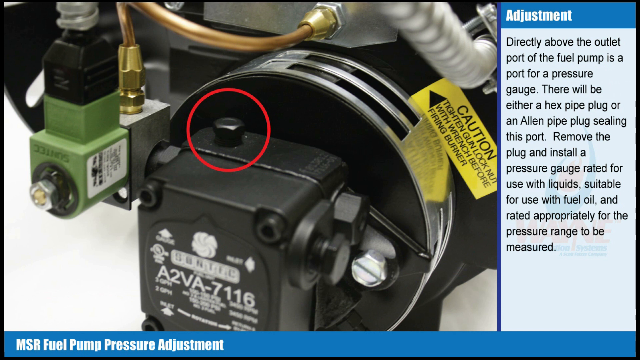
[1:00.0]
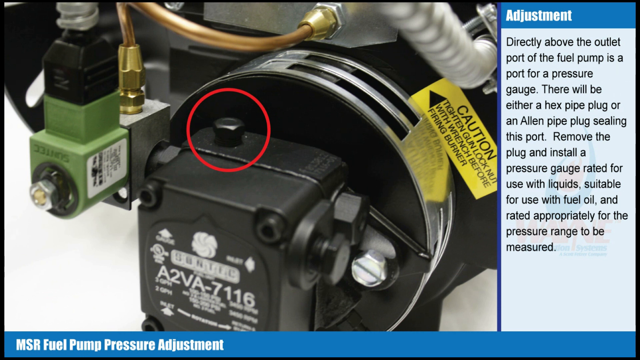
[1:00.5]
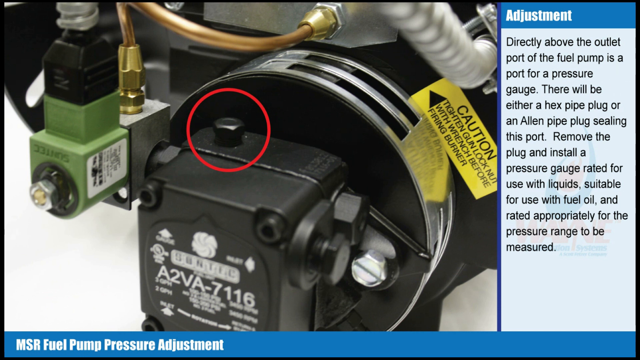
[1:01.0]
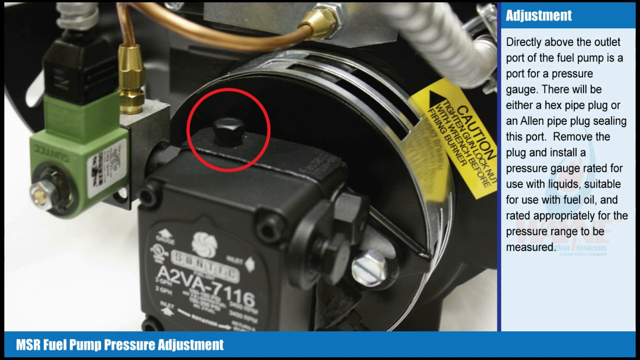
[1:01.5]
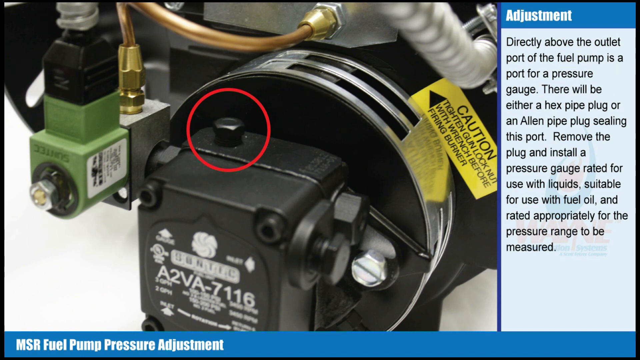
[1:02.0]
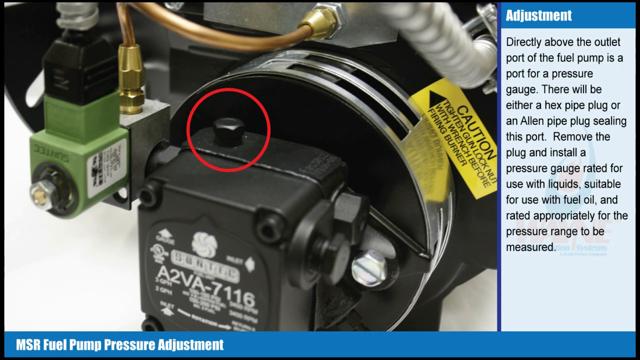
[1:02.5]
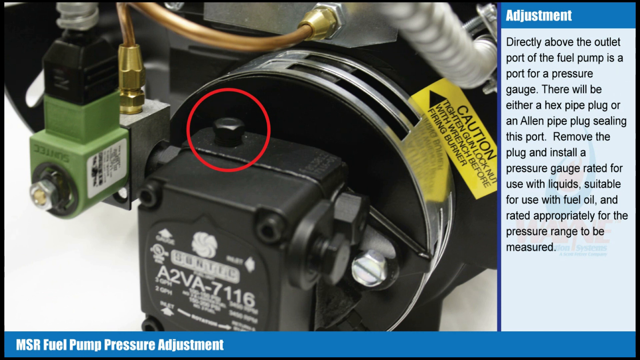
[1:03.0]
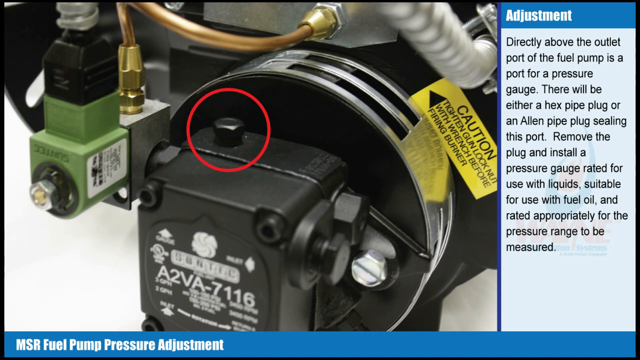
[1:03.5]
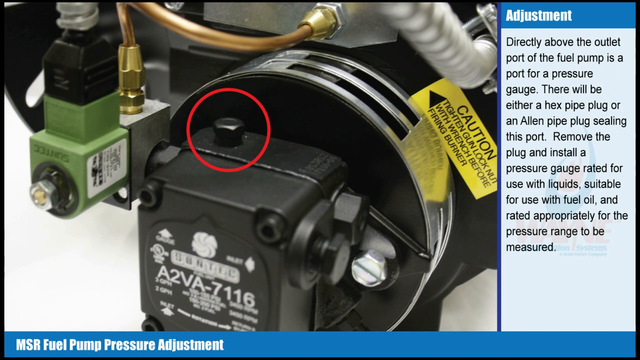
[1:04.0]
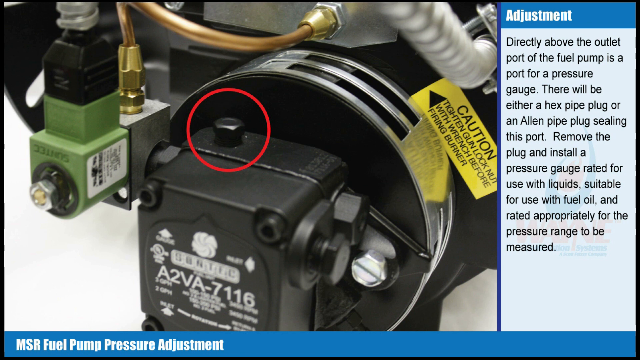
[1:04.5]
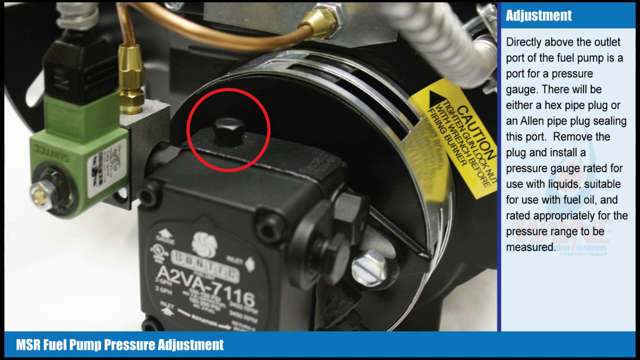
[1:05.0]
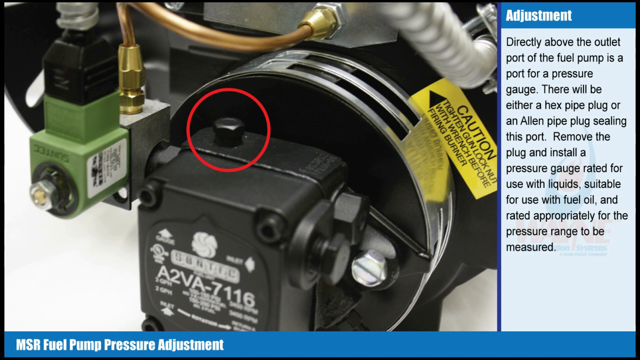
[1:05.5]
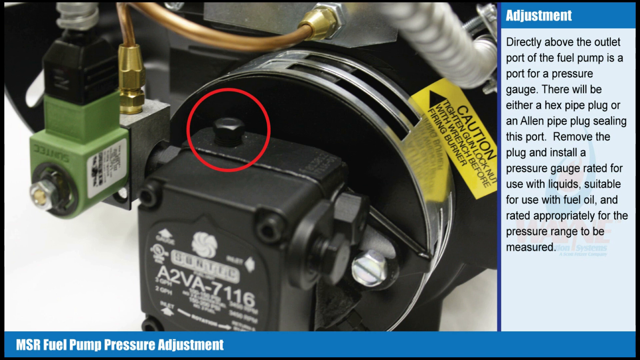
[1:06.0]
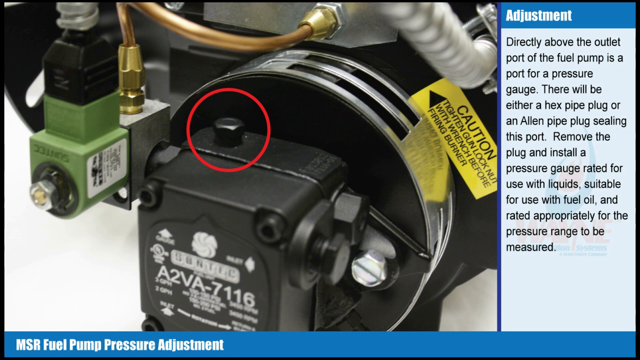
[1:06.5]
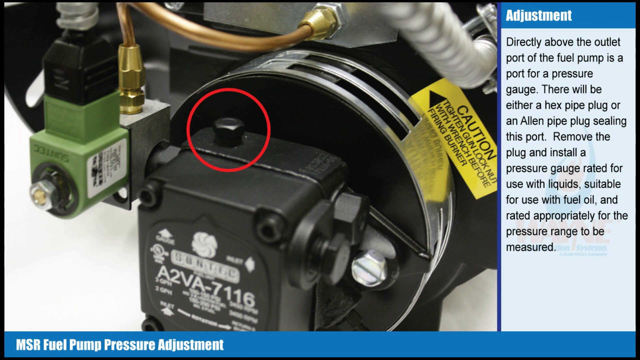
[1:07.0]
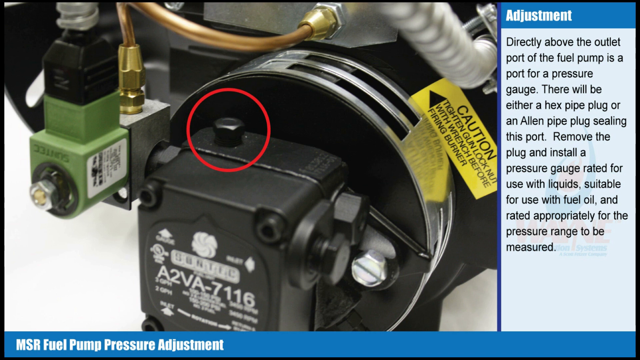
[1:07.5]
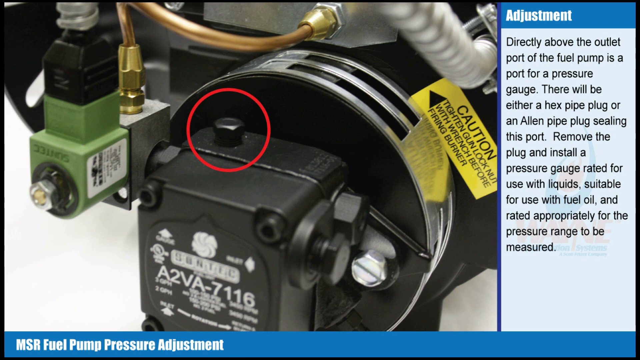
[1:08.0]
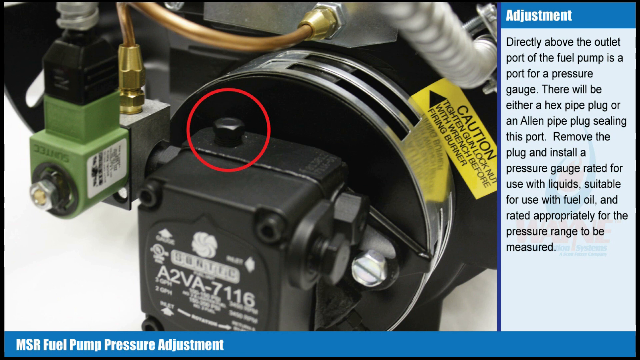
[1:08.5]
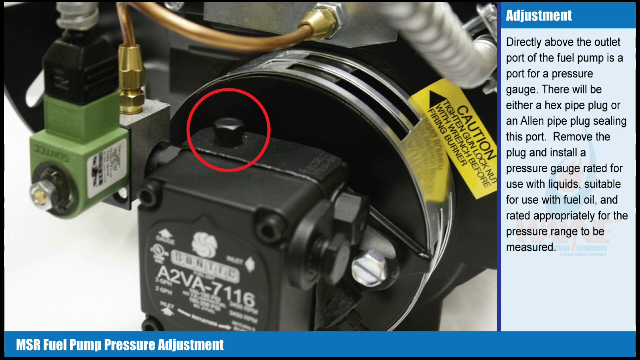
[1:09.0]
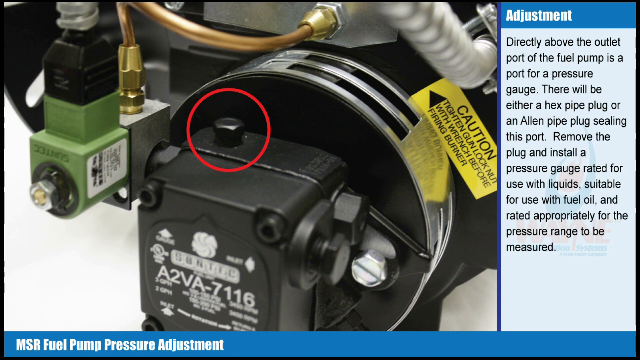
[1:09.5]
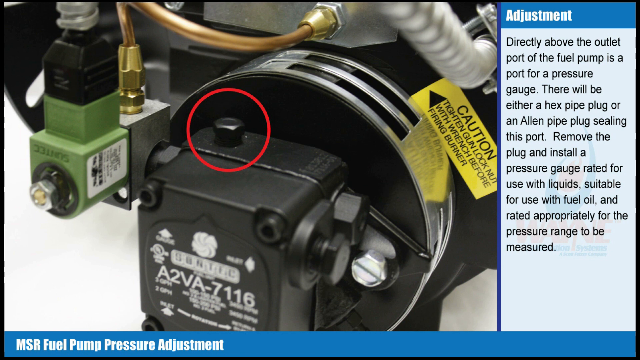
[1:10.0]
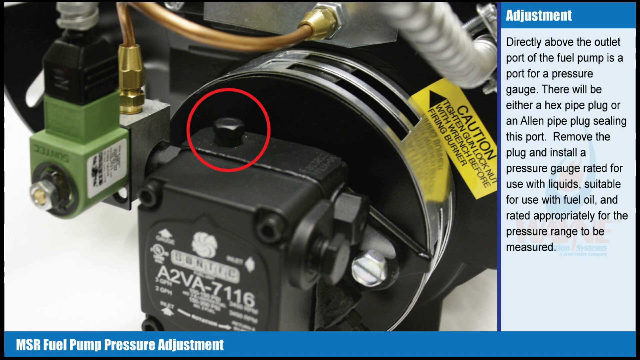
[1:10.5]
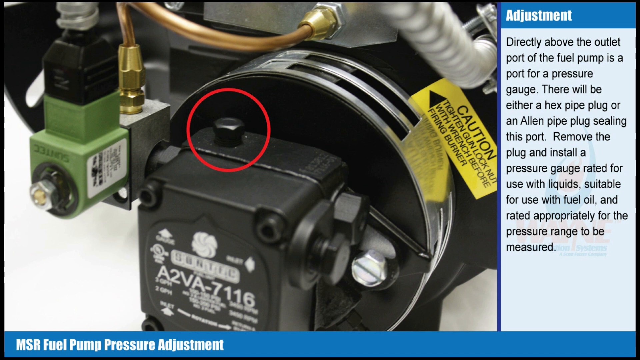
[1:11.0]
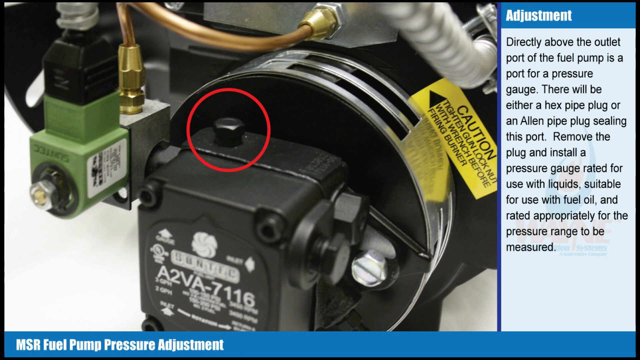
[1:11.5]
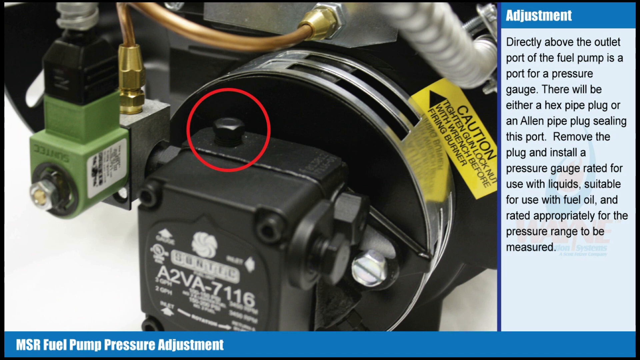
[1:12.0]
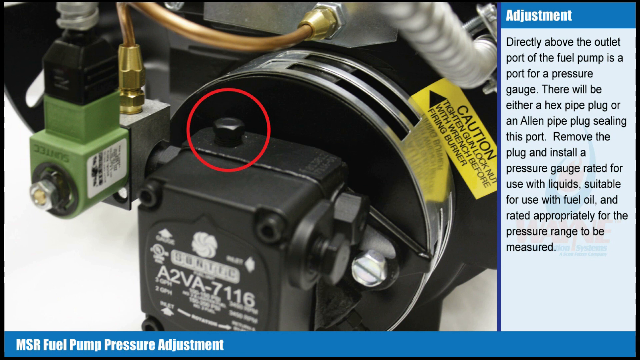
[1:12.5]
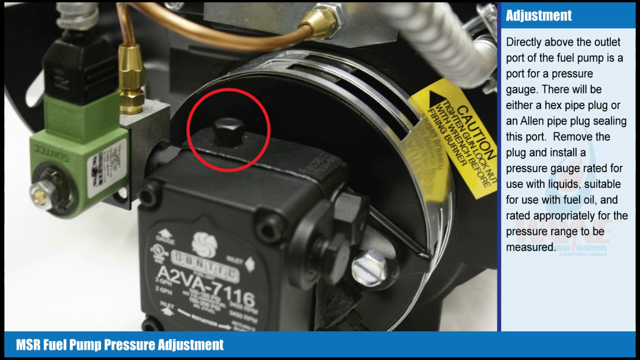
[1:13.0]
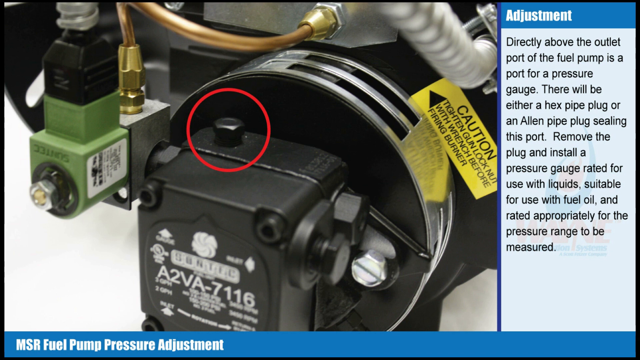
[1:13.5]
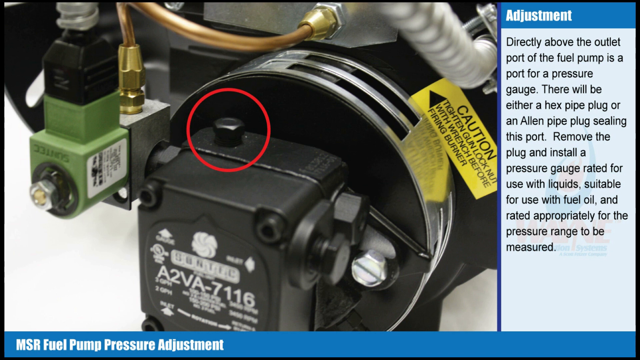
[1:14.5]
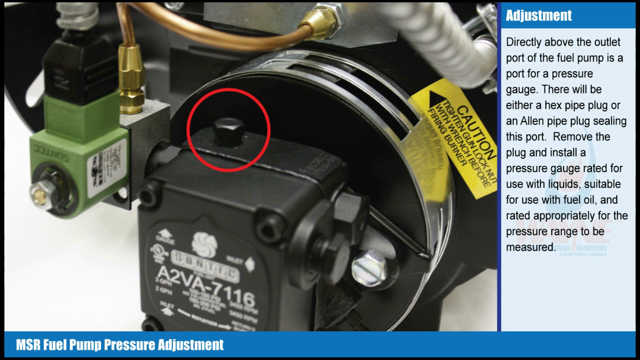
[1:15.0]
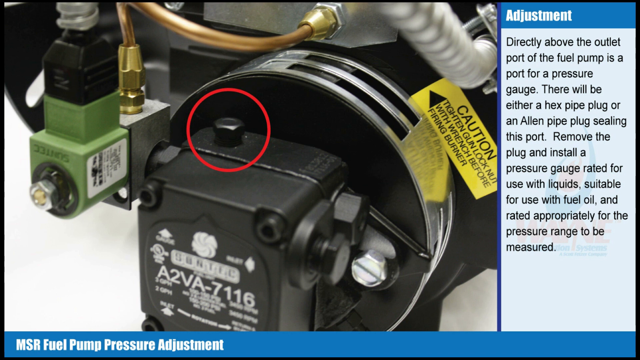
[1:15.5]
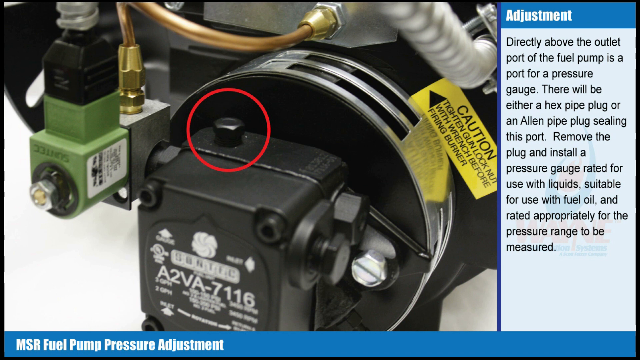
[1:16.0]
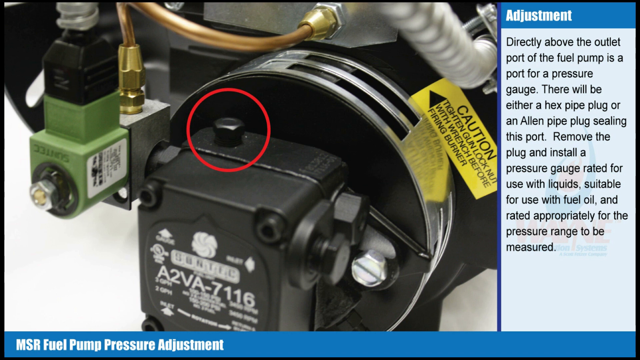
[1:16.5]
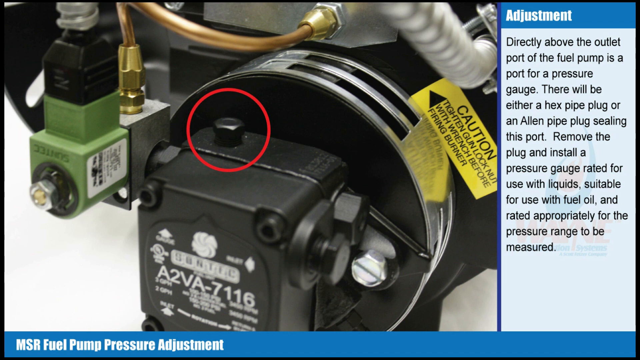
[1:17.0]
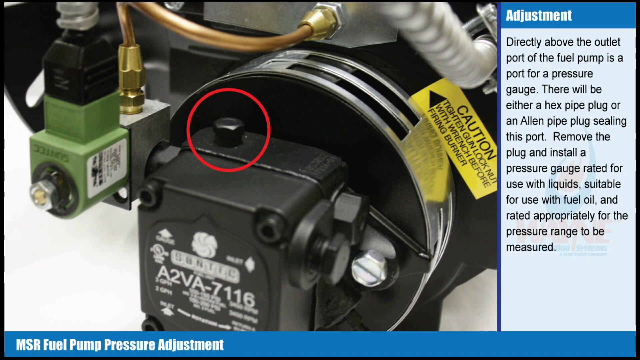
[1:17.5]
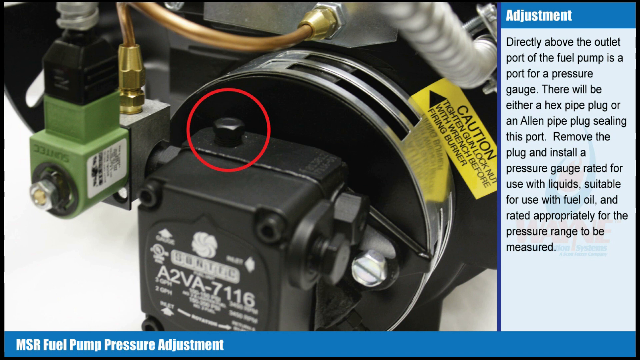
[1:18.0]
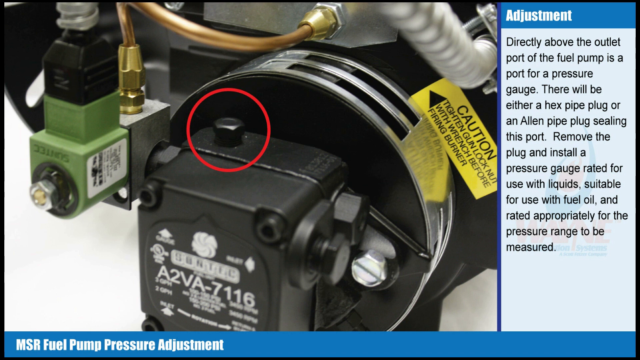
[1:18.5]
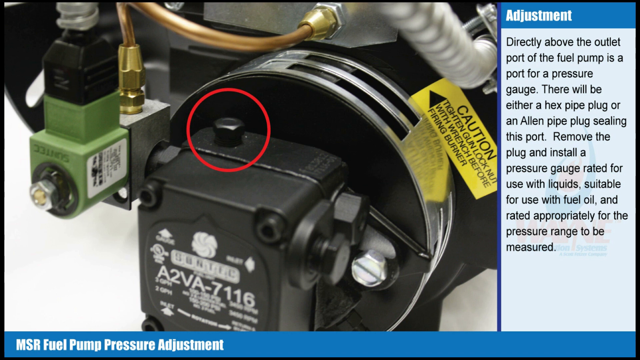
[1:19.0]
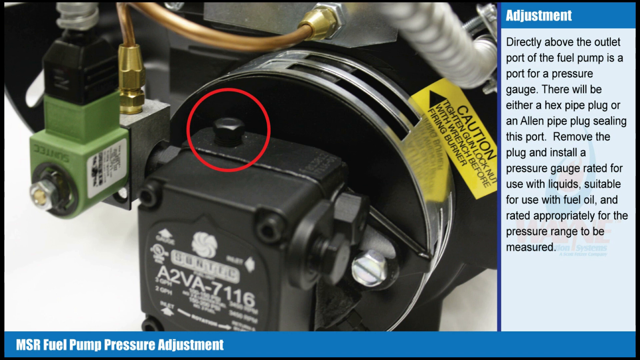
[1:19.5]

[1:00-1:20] The same front view of the fuel pump is shown, with the gauge highlighted in a red circle at the top front of the port. The text still reads "directly above the outlet port of the fuel pump is a port for a pressure gauge. There will be either a hex pipe plug or an Allen pipe plug sealing this port. Remove the plug and install a pressure gauge rated for use with liquid suitable for use with fuel oil and rated appropriately for the pressure range to be measured." This view and text stay on screen the entire time. A copper cord goes through the top of the fuel pump toward the left side, connecting it into a silver box. In front of the silver cube is a green plastic part of the fuel pump with a silver screw on the front.